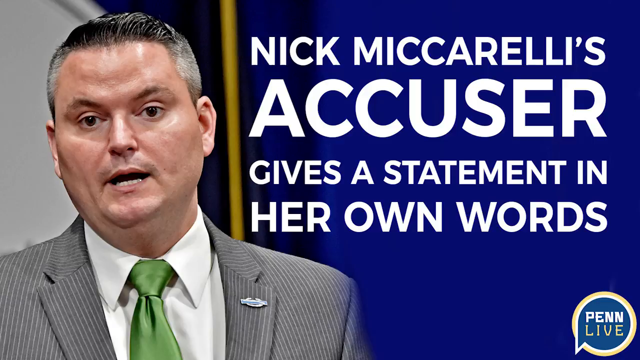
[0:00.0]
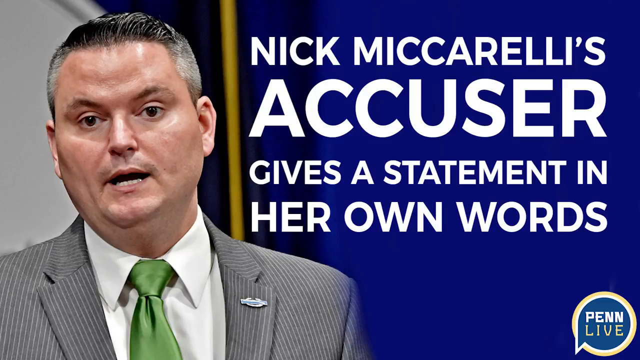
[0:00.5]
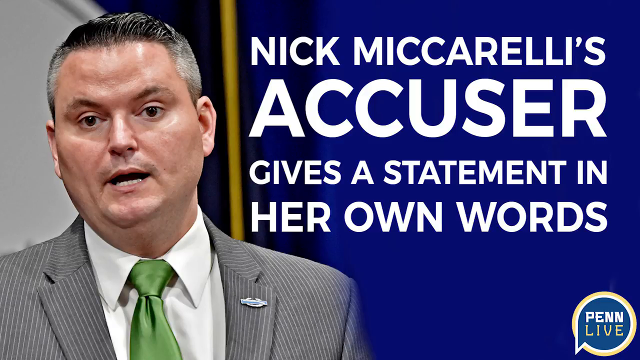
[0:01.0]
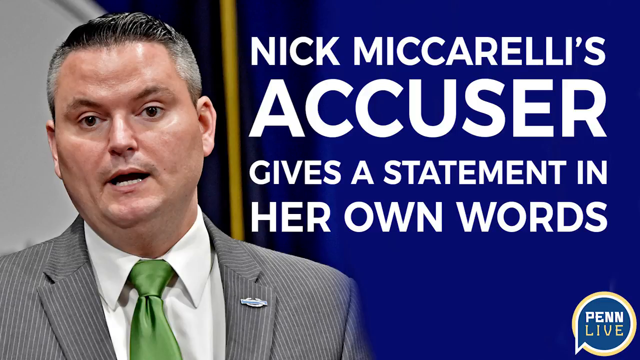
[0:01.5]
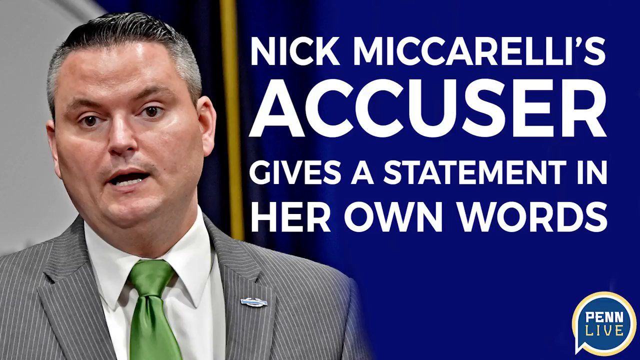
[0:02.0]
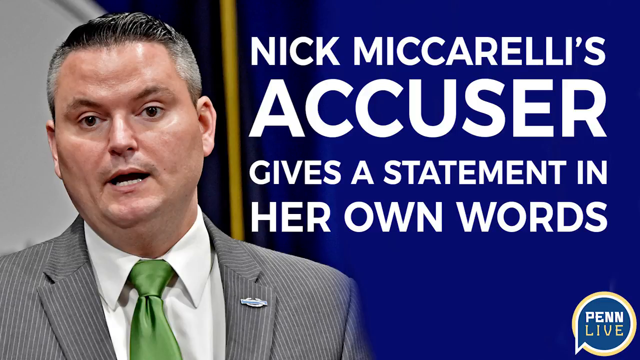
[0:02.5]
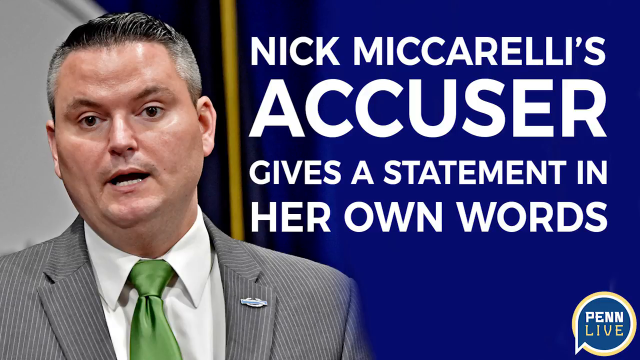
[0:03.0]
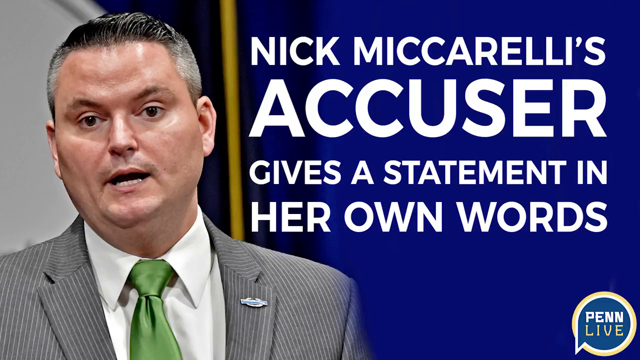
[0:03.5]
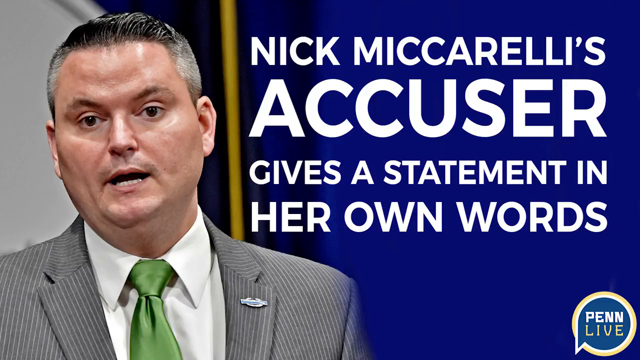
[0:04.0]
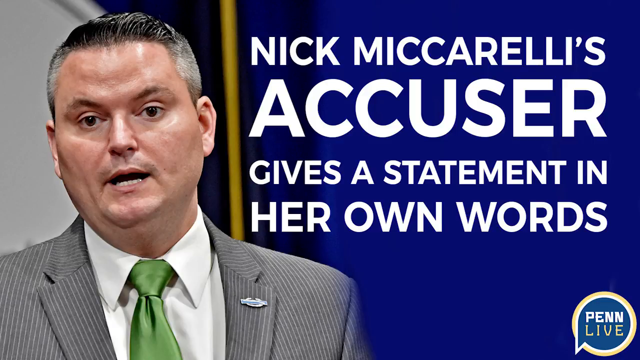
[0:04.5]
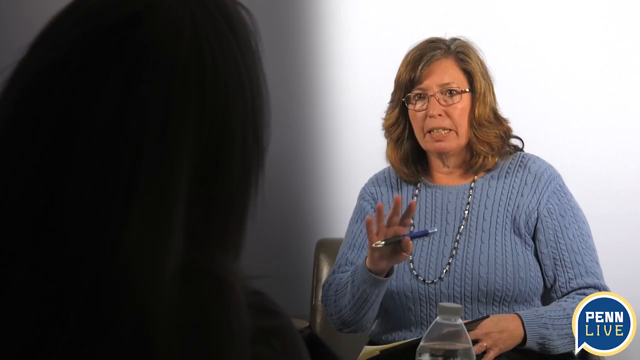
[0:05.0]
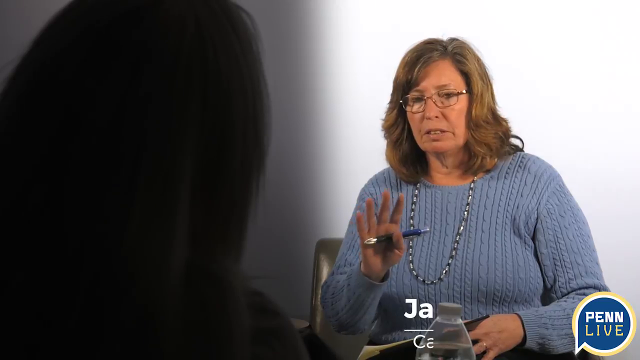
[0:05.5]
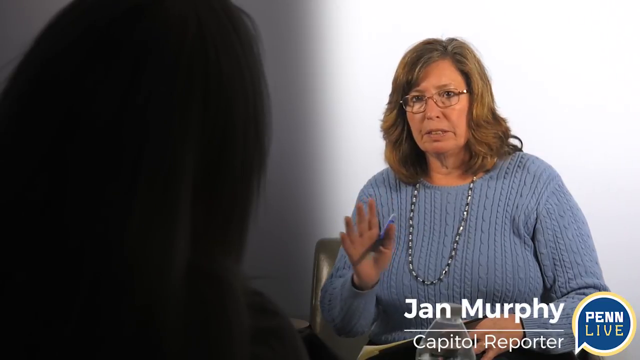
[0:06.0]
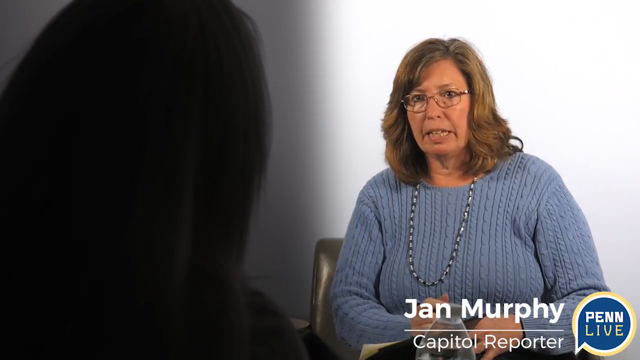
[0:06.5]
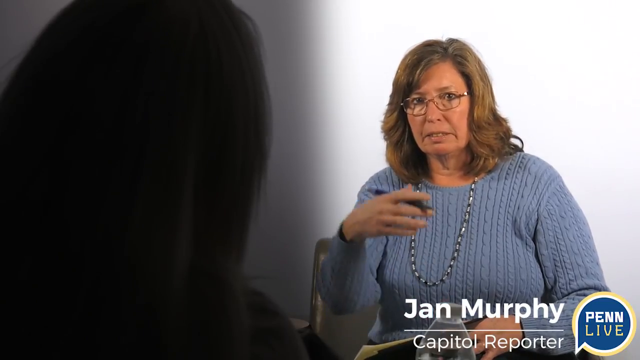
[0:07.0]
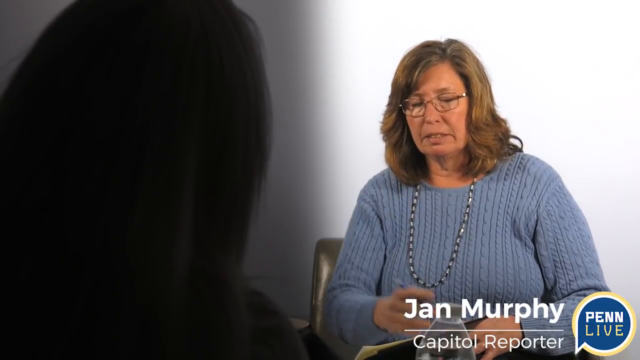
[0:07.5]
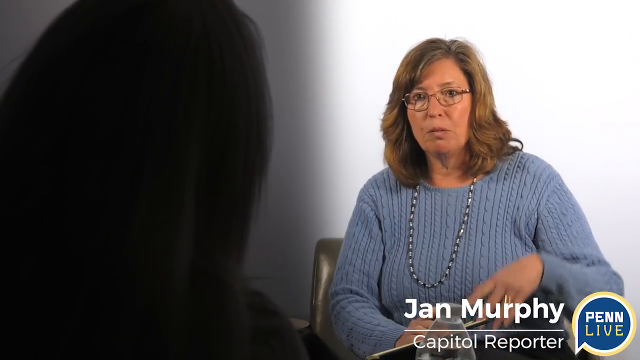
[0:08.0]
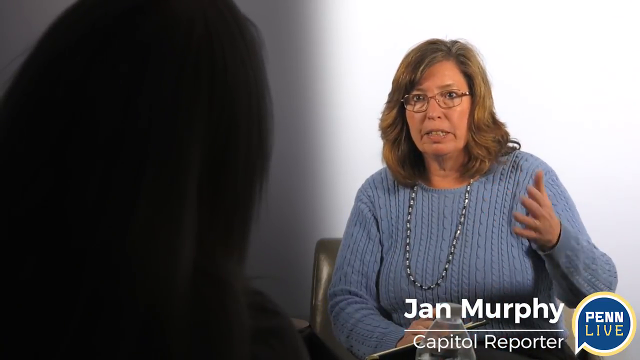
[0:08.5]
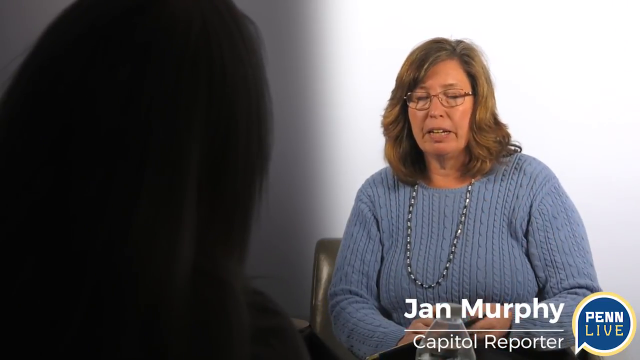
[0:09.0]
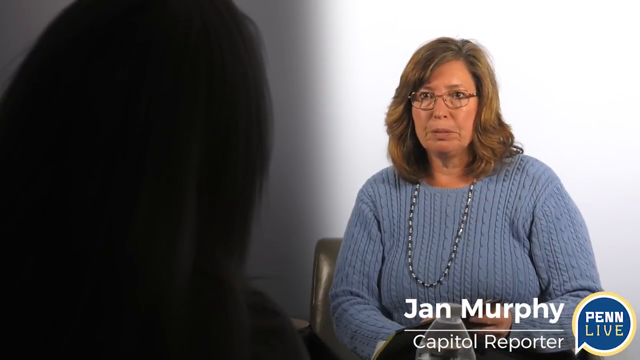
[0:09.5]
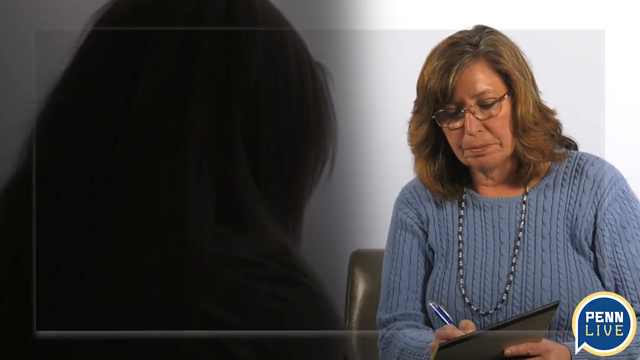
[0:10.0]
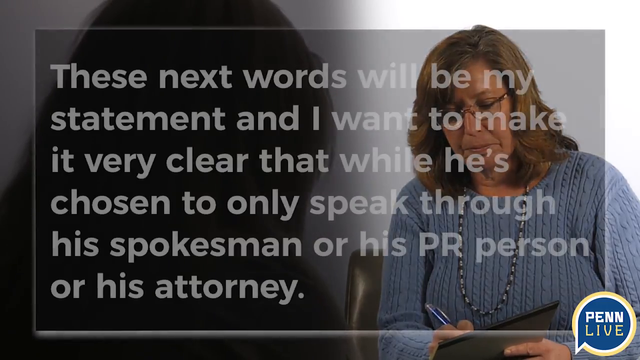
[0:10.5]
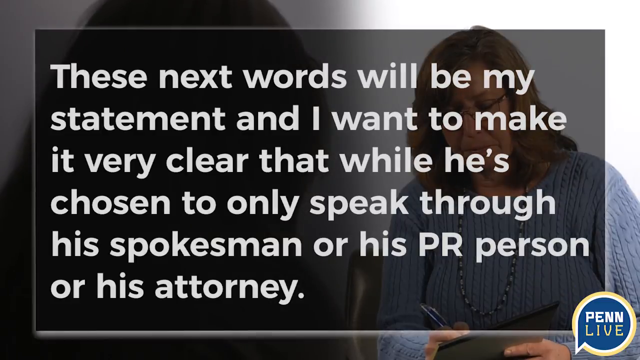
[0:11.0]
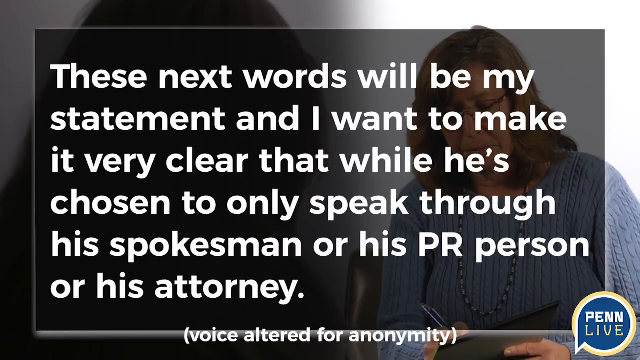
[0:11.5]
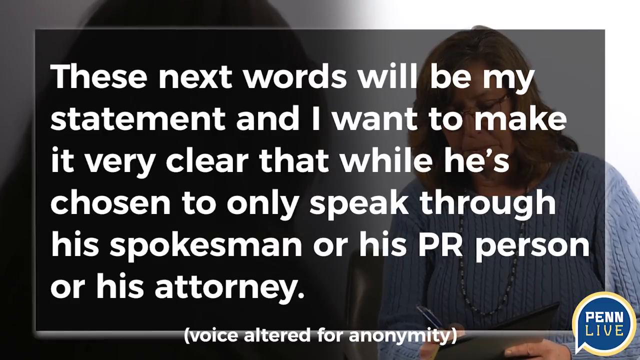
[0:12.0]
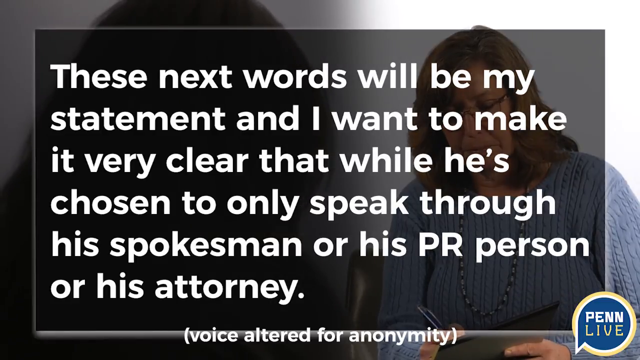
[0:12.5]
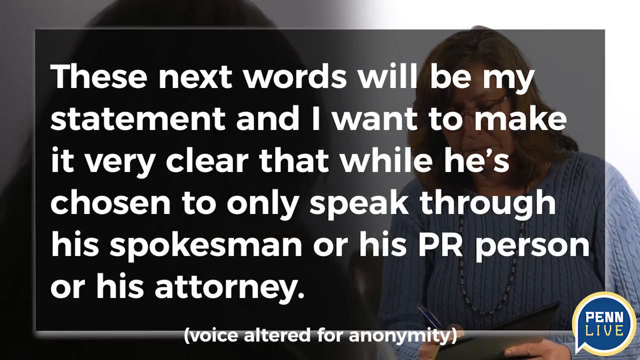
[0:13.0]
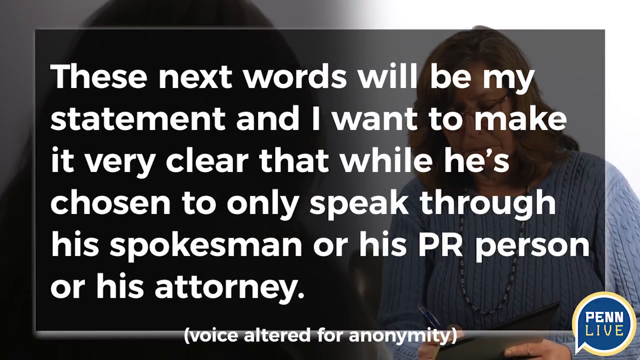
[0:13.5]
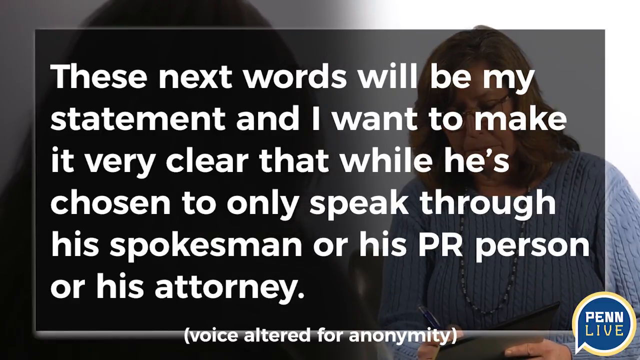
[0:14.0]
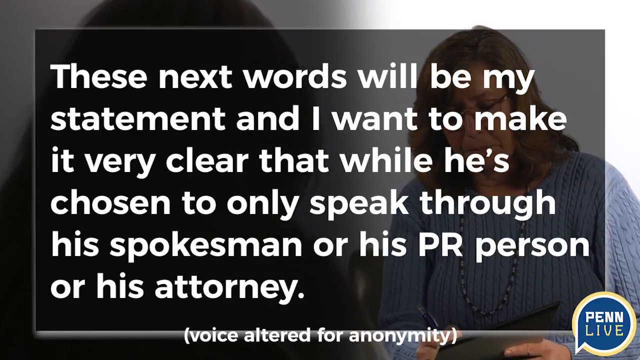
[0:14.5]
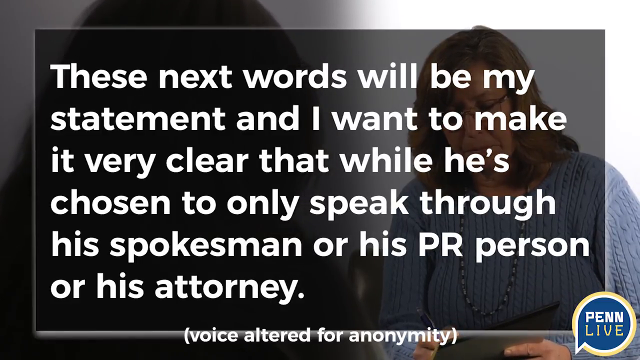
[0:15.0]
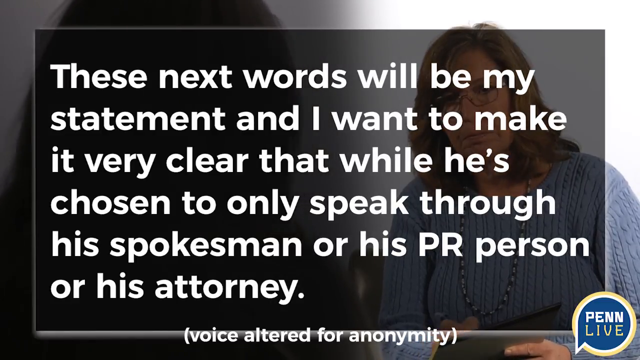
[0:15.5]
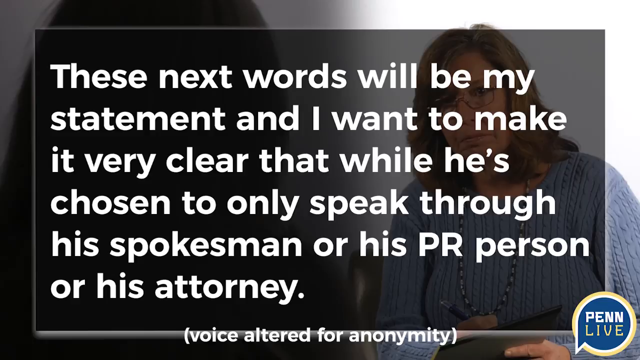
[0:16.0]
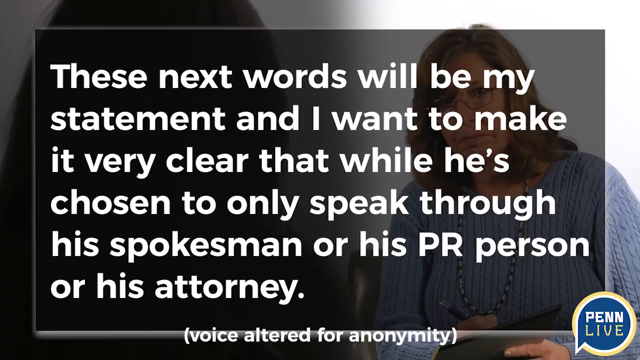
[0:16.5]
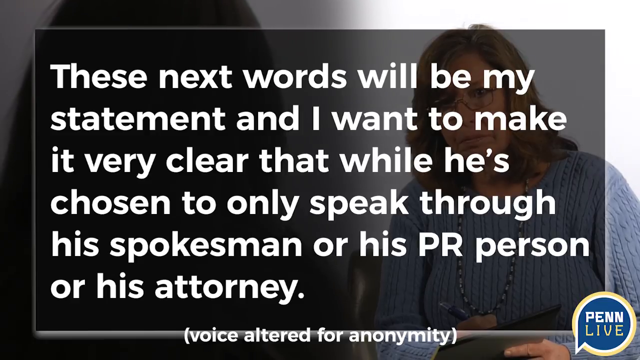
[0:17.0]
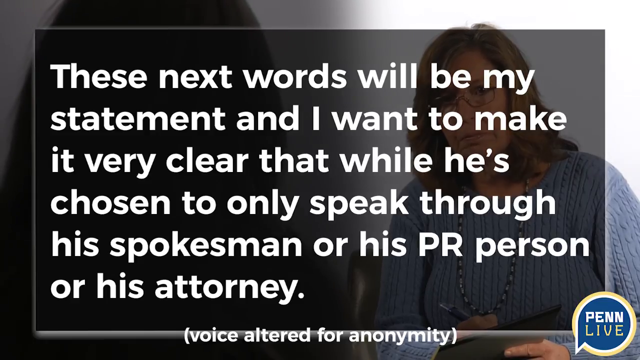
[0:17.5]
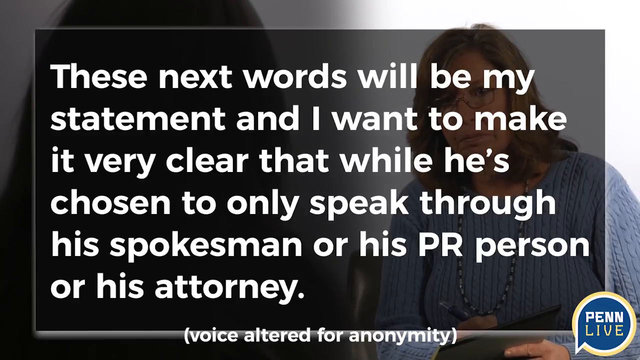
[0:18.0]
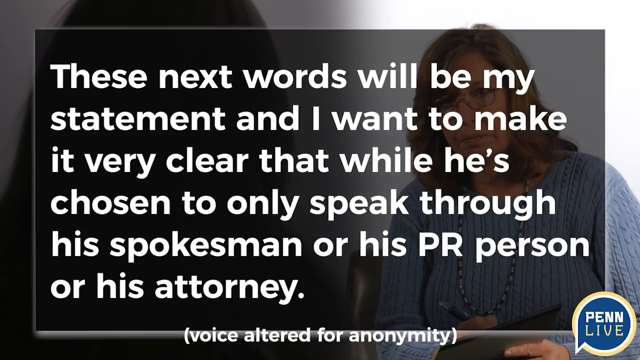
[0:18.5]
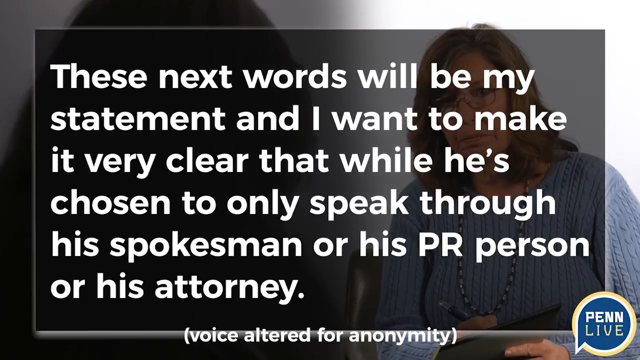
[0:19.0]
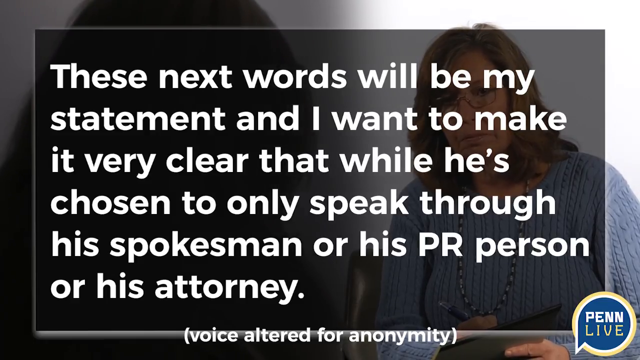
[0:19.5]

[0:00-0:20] The video concerns an accuser who gives a statement in her own words about Nick, whom she accused. A female with blonde hair wears glasses, a top and a blue jersey, and a necklace around her neck. Another person, who is being interviewed, is visible only by their head and hair; their face is not visible. A caption in bold white font appears, introducing a statement that is about to be made. This appears to be an interview between two people. A male wearing a formal suit is also displayed. There is also a reference to a PR machine, a spokesman and an attorney.